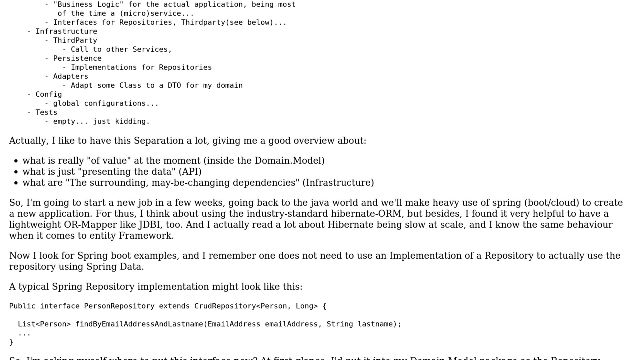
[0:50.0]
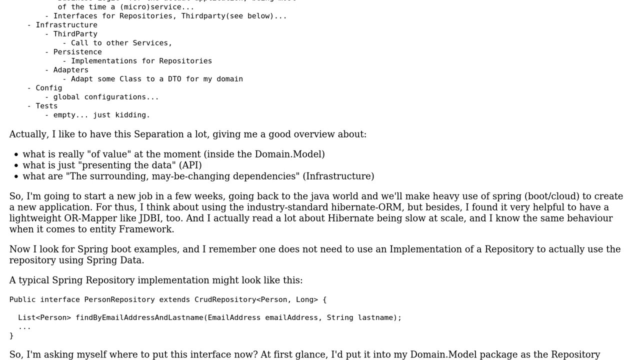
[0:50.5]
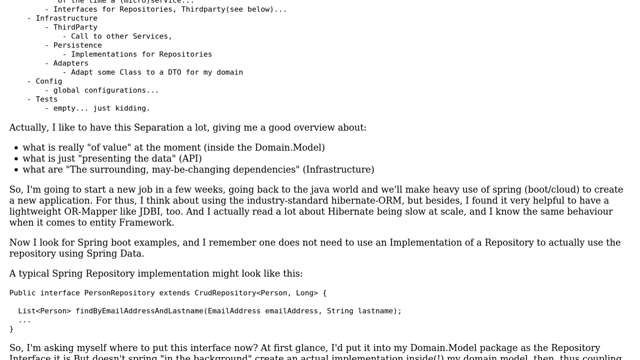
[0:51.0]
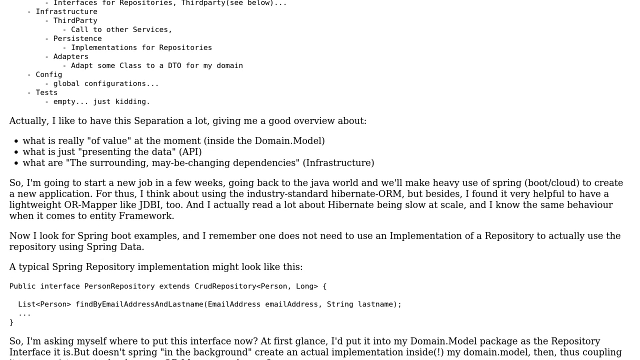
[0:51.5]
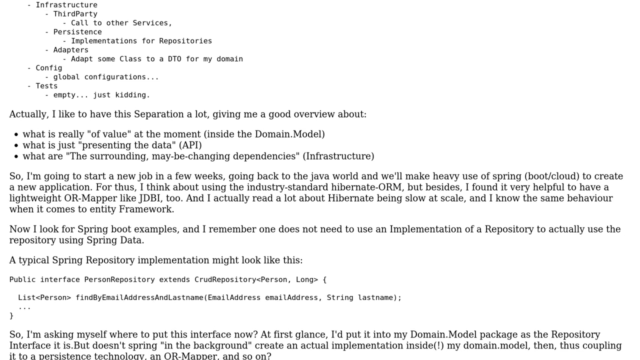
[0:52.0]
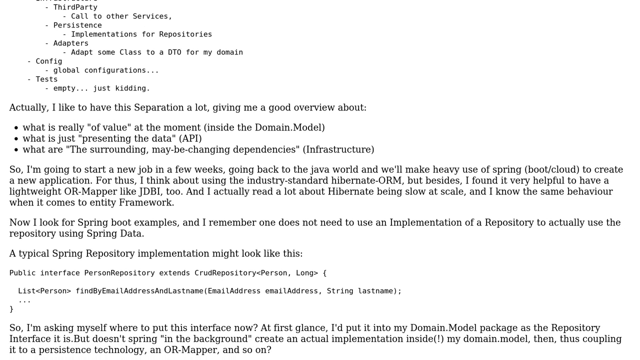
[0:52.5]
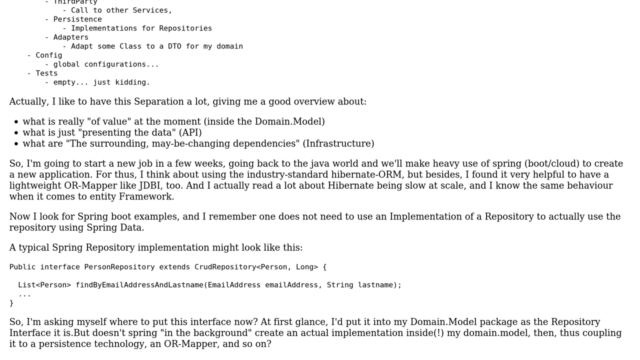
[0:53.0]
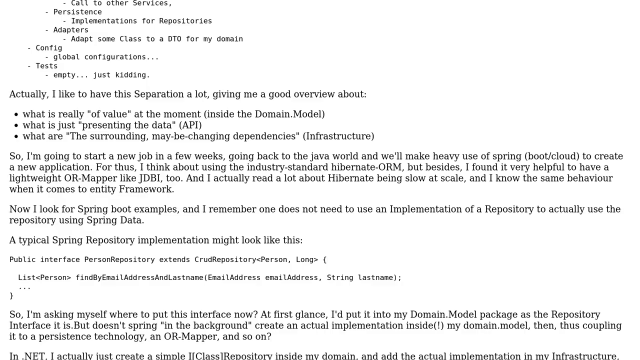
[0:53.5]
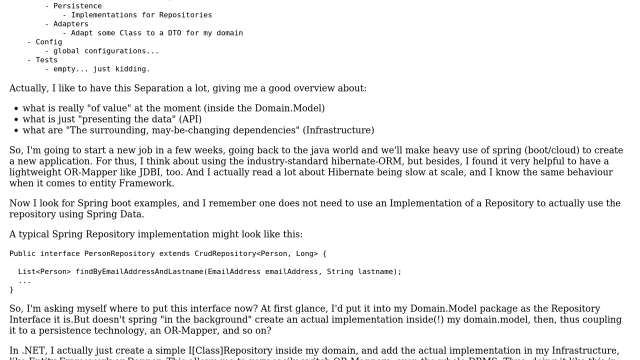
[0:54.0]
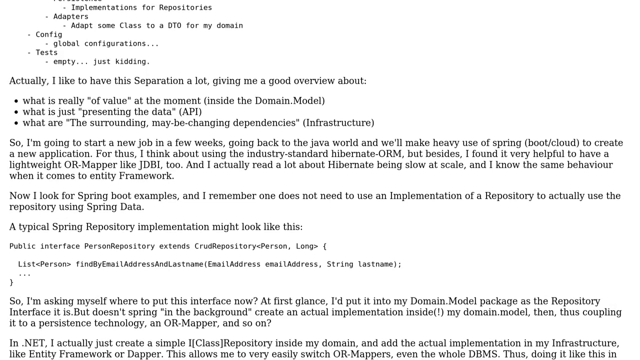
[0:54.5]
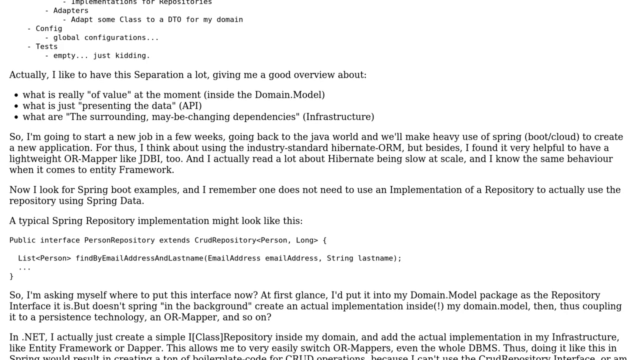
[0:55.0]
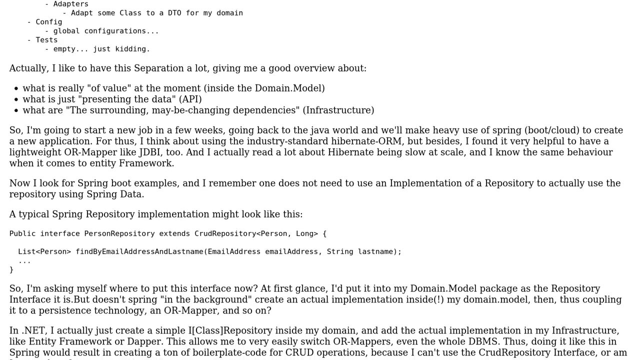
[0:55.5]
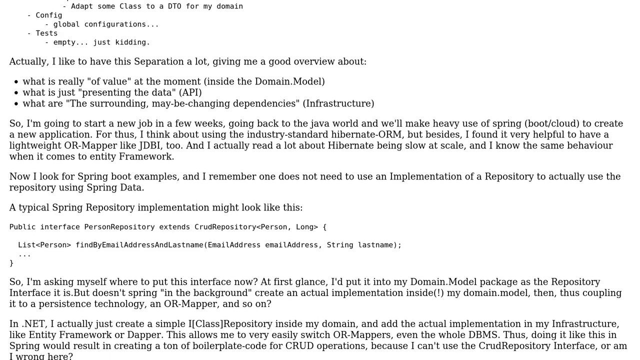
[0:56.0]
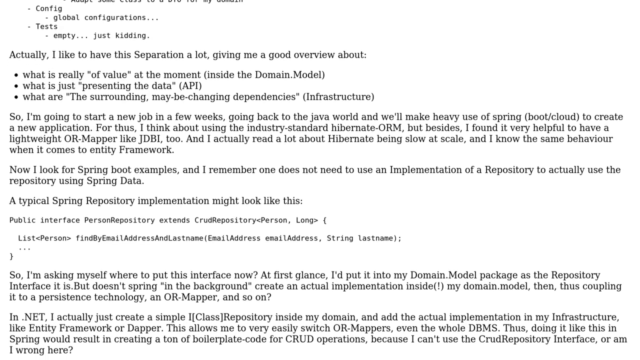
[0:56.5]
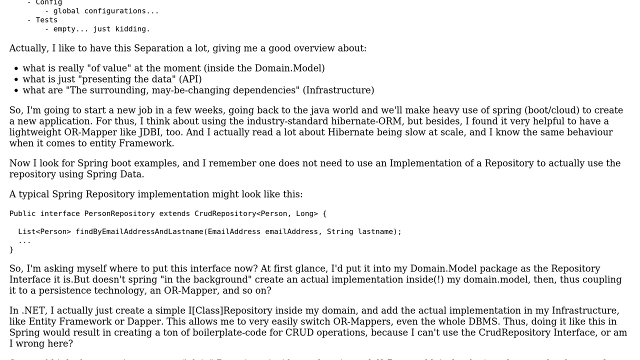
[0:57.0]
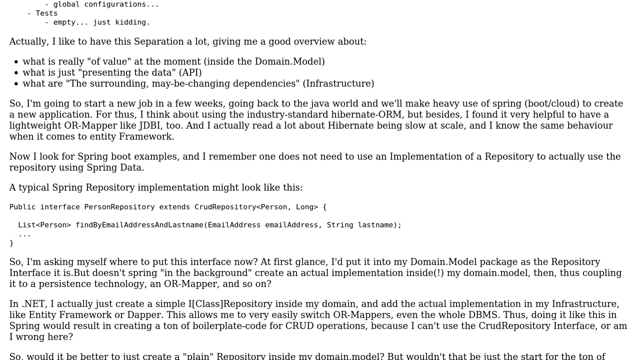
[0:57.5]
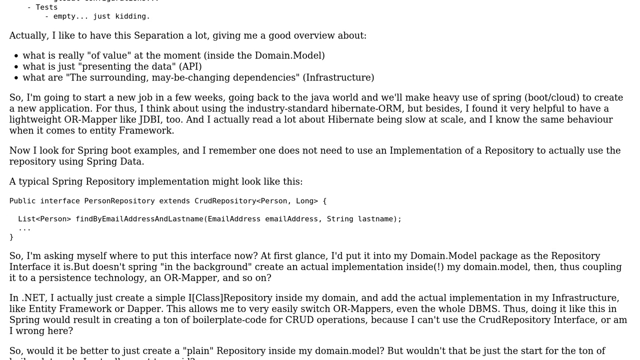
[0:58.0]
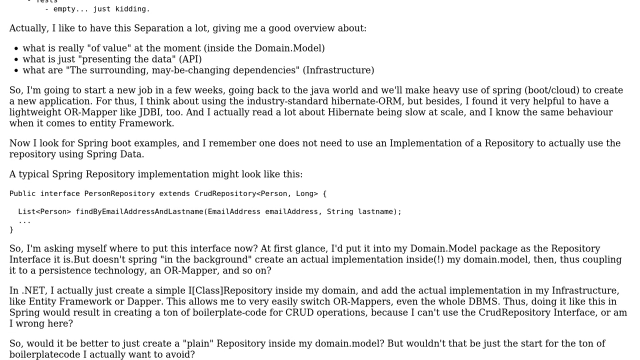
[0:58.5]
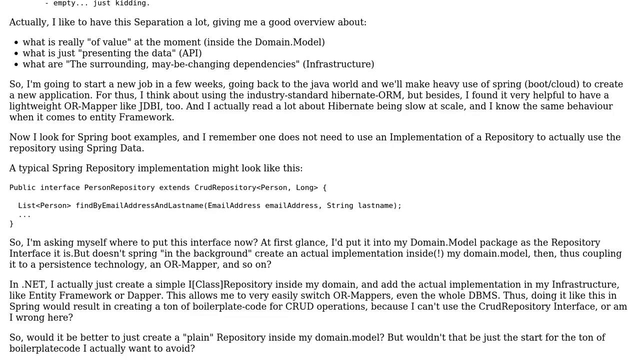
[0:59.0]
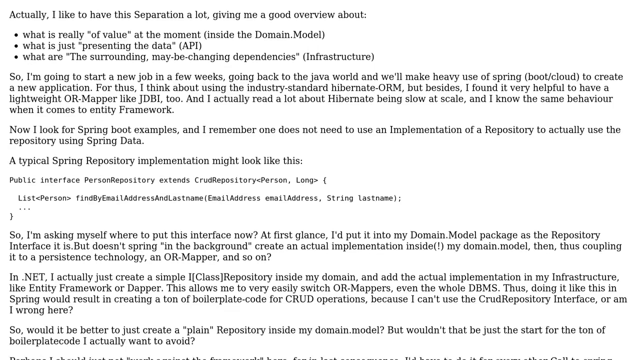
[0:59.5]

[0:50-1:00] The text document scrolls down a little. Before a bulleted section, it reads "Actually, I like to have this separation a lot, giving me good overview about", followed by bullet points: what is really "of value" (domain.model), what is just "presenting the data" (API), and what are "the surrounding, maybe changing dependencies" (infrastructure). The text continues: "So I'm going to start a new job in a few weeks going back to the Java world", mentions Spring (boot/cloud), and says "I'm thinking about using industry-standard Hibernate-ORM, but besides, I found it very helpful to have a lightweight ORM wrapper like JDBI too. And I actually read a lot about Hibernate being slow at scale". It then reads "Now I look for Spring boot examples and I remember one does not need to use implementation of a repository to actually use the repository using Spring data."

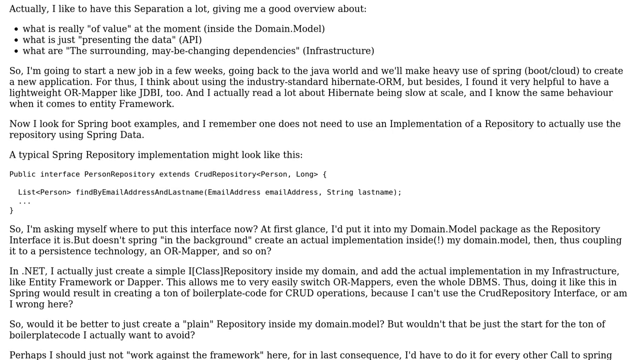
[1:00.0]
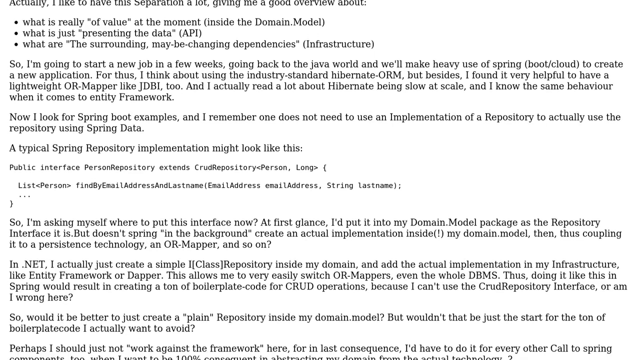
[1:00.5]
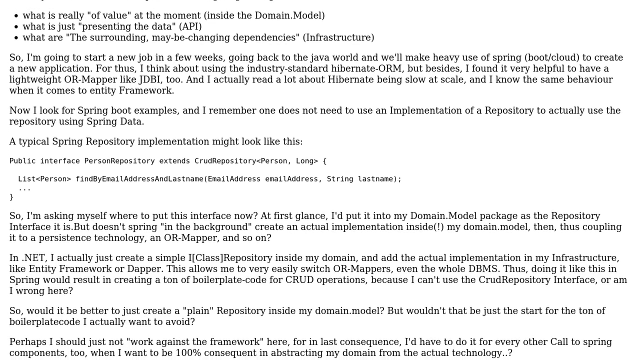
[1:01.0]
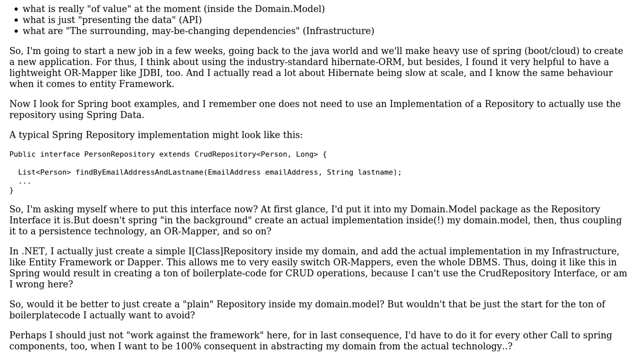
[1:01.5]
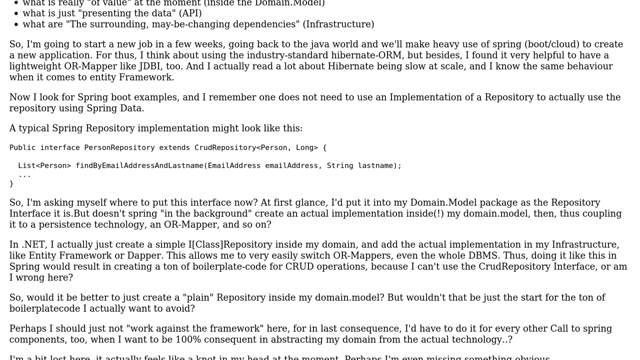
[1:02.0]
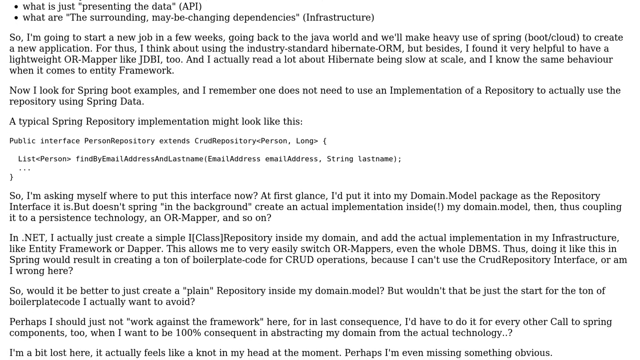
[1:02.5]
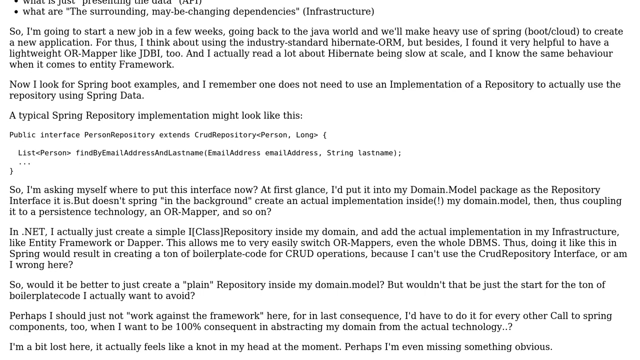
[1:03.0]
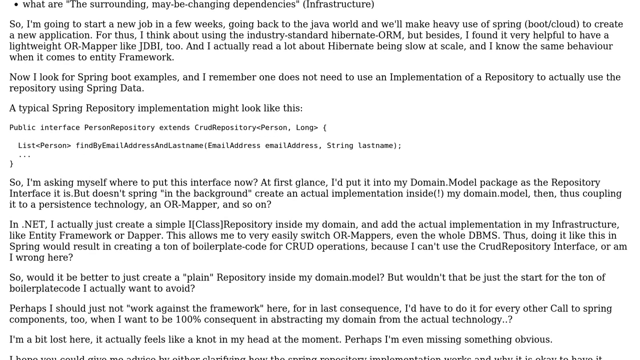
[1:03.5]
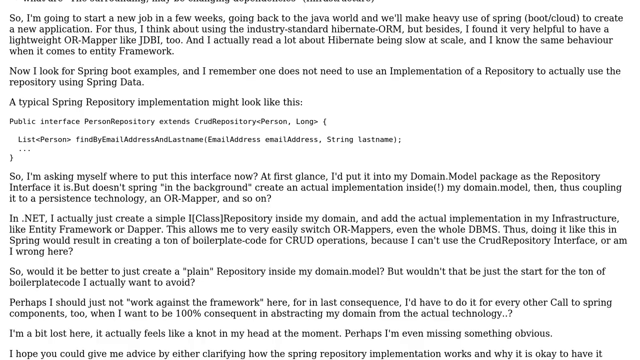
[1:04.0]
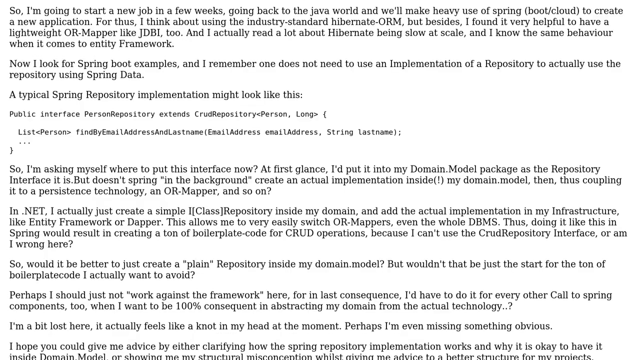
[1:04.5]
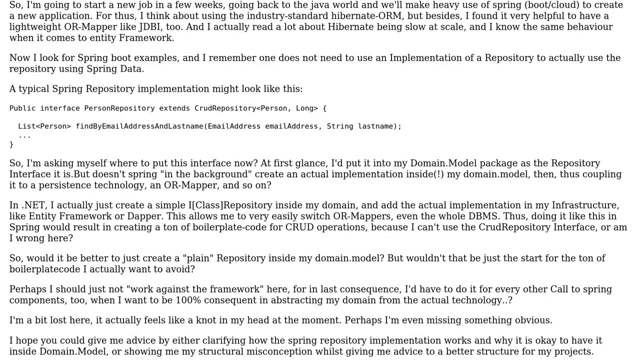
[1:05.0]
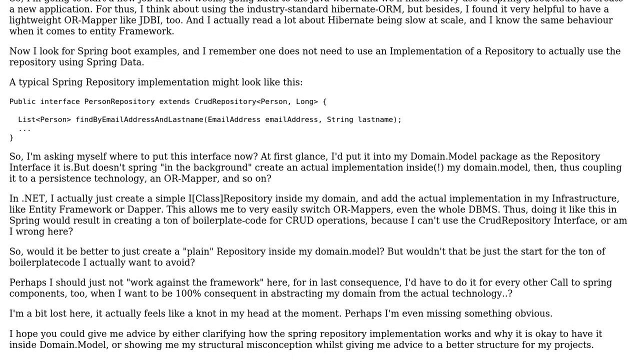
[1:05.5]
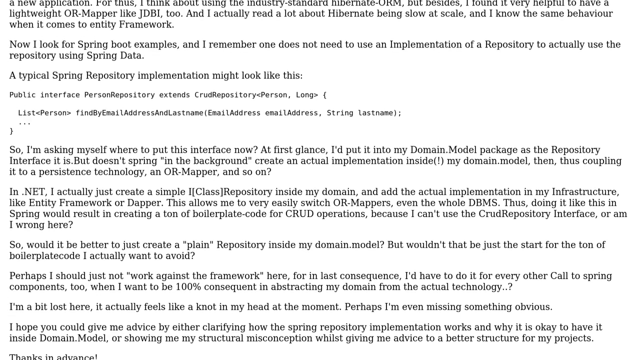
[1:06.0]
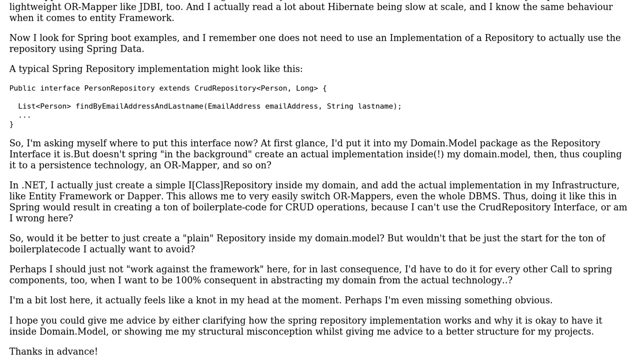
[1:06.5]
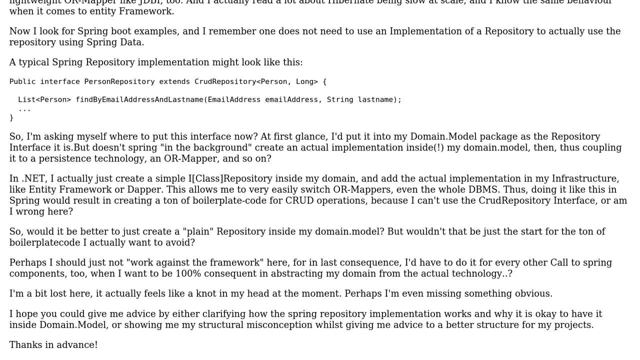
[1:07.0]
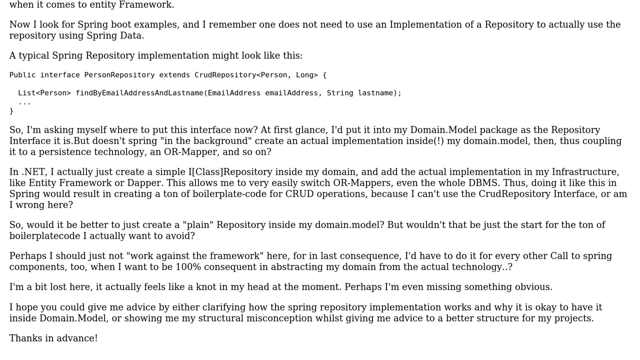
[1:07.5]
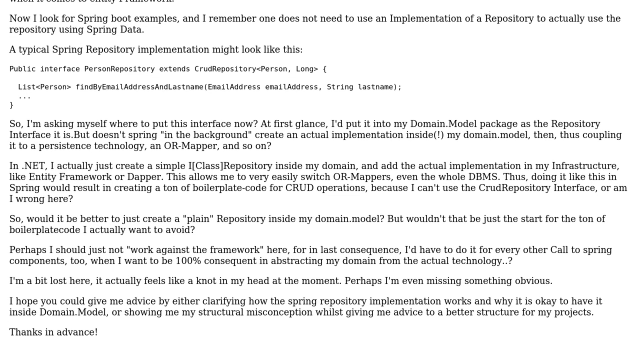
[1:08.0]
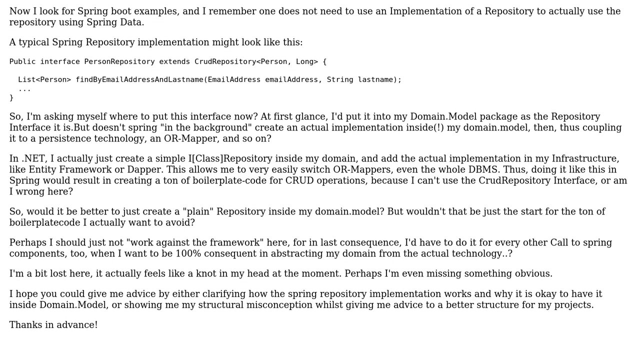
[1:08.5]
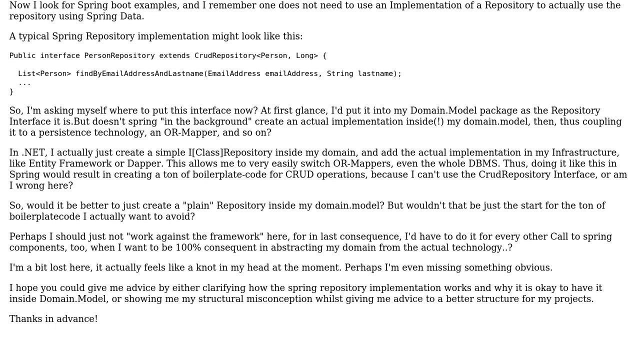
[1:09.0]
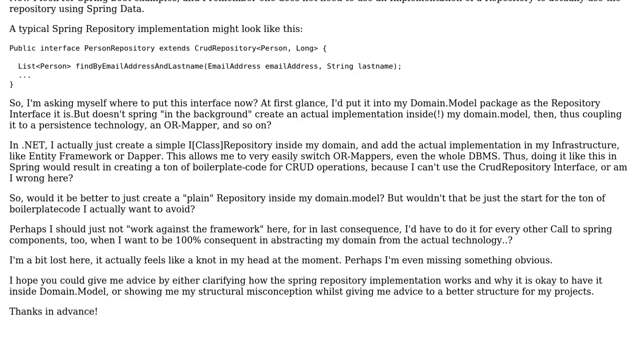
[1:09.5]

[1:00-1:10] The text document scrolls a bit further. It reads "A typical spring repository implementation might look like this", followed by a block of code. After the code it says "So I'm asking myself where to put the" and "At first glance, I put it in the domain.model package as a repository interface." Further text mentions .NET, Entity Framework or Dapper, and "This allows me to very easily switch OR-mappers", and refers to creating "a ton of boilerplate code for CRUD operations because I can't use my core repository interface or am I wrong here?" A new paragraph asks "So would it be better to just create a "plain" repository inside my domain model? But wouldn't that just be the start for the ton of boilerplate code I actually want to avoid?"